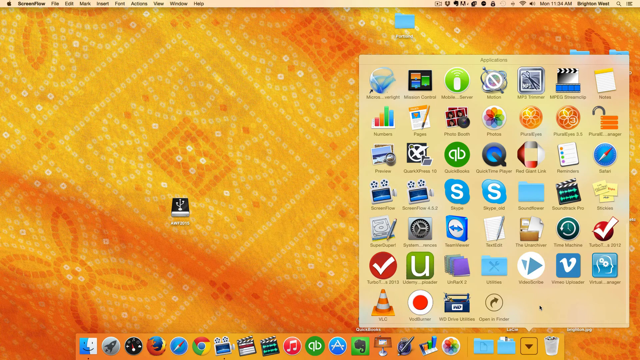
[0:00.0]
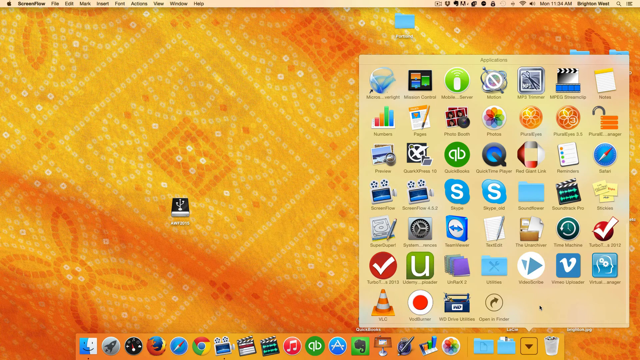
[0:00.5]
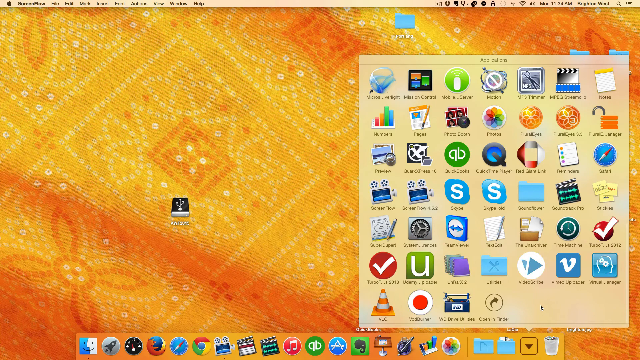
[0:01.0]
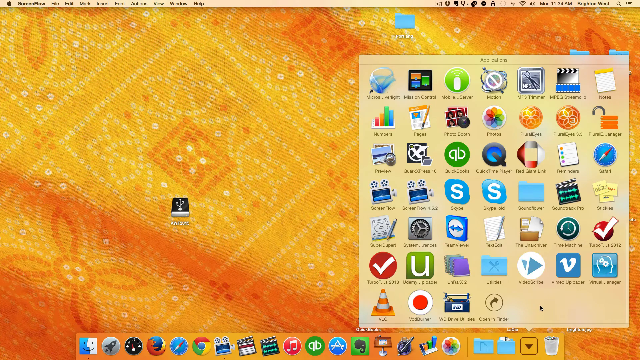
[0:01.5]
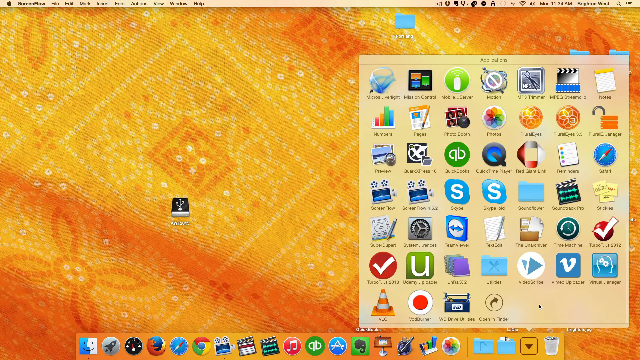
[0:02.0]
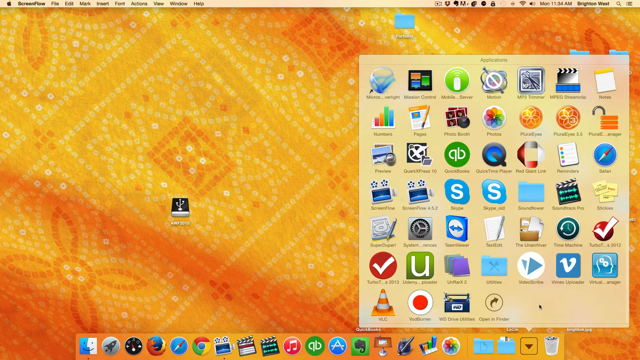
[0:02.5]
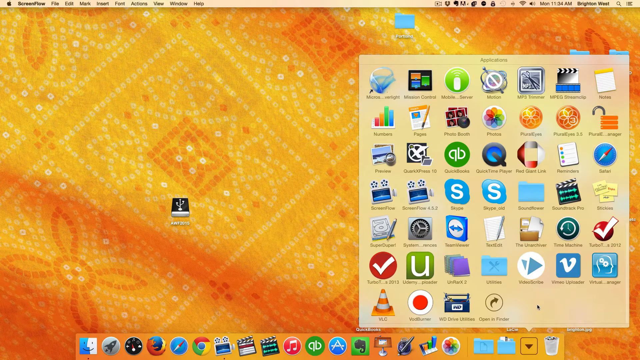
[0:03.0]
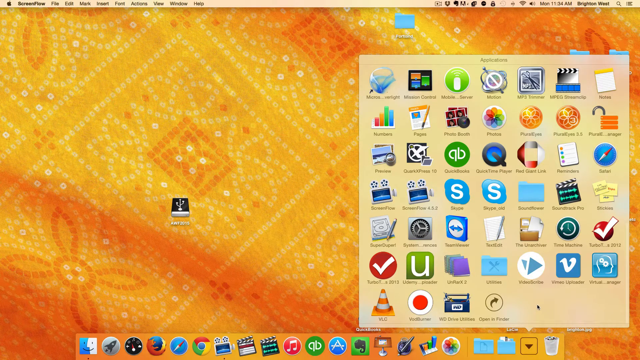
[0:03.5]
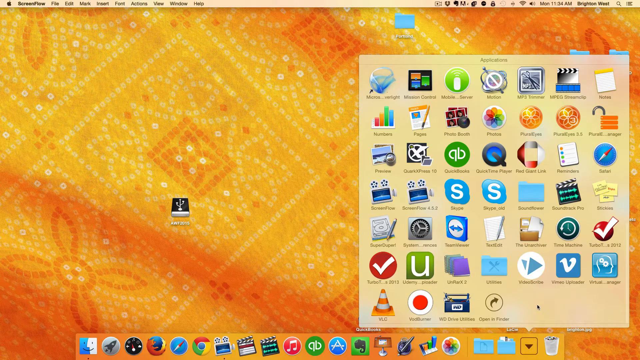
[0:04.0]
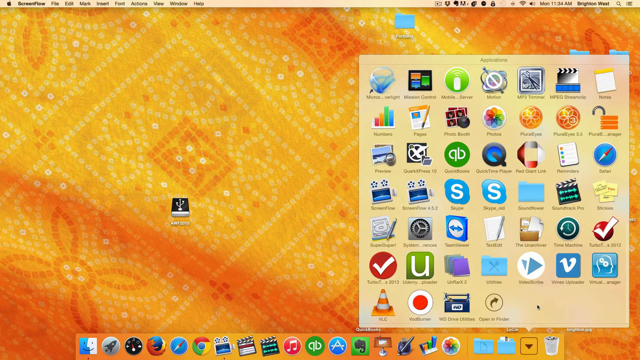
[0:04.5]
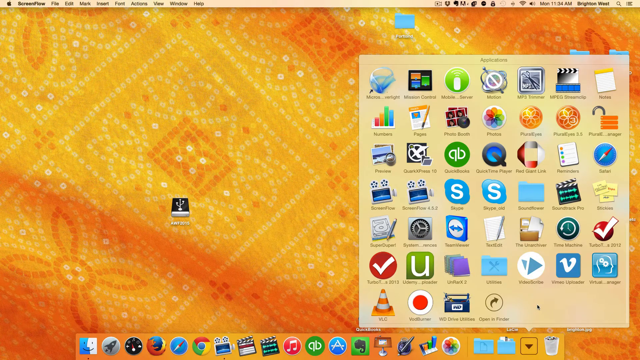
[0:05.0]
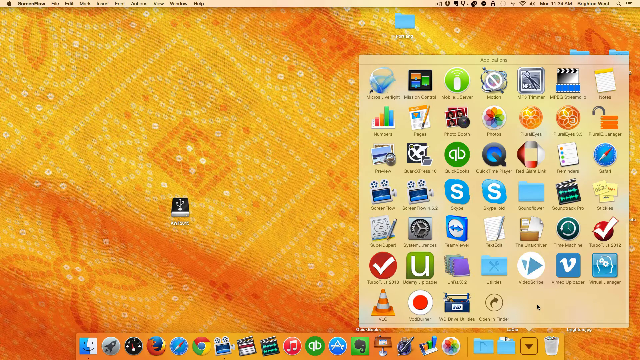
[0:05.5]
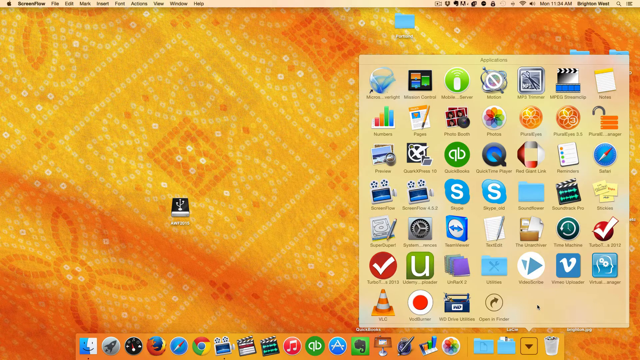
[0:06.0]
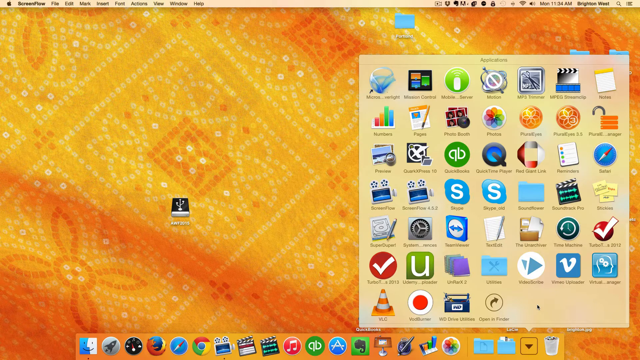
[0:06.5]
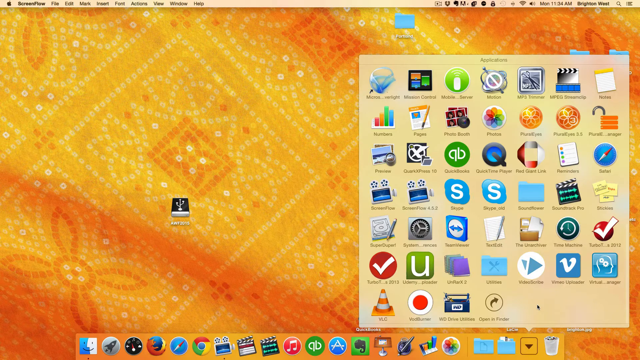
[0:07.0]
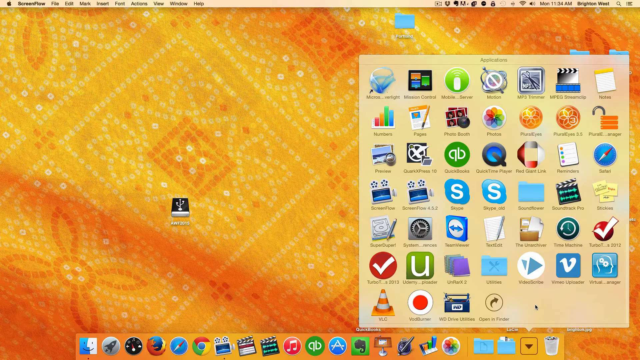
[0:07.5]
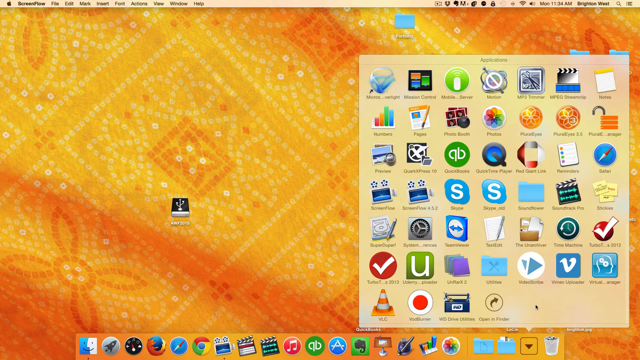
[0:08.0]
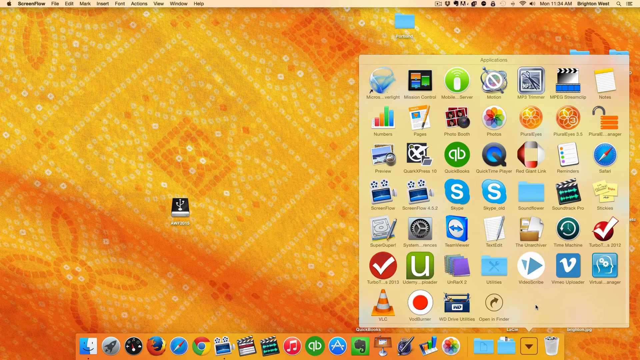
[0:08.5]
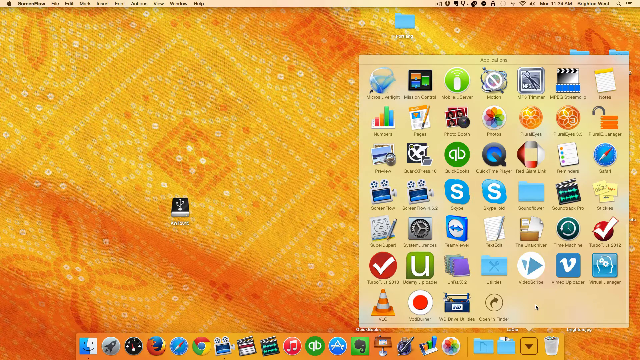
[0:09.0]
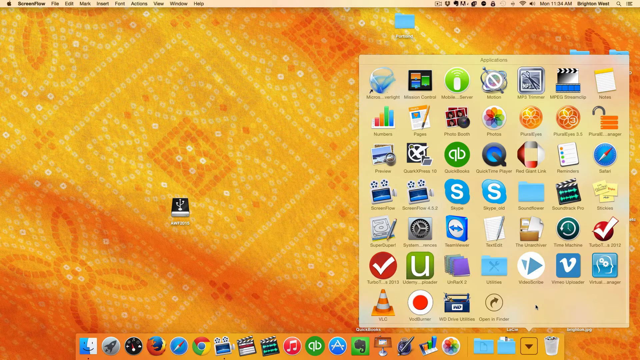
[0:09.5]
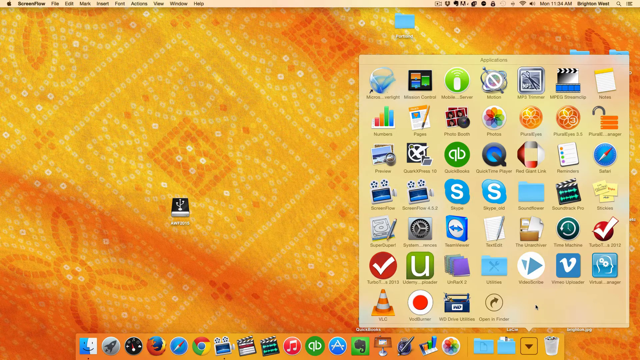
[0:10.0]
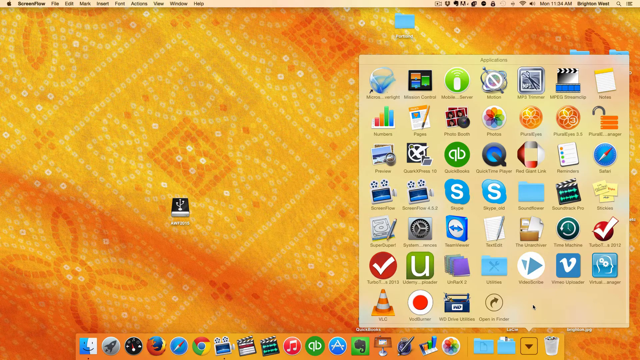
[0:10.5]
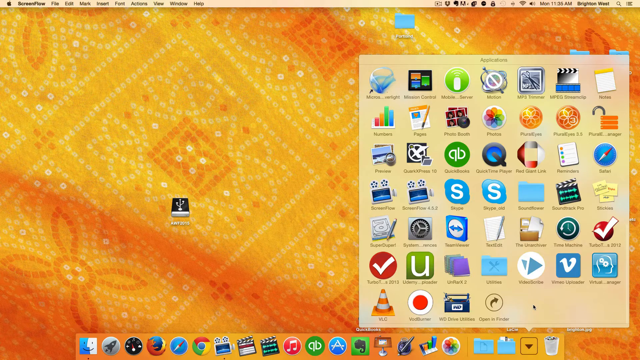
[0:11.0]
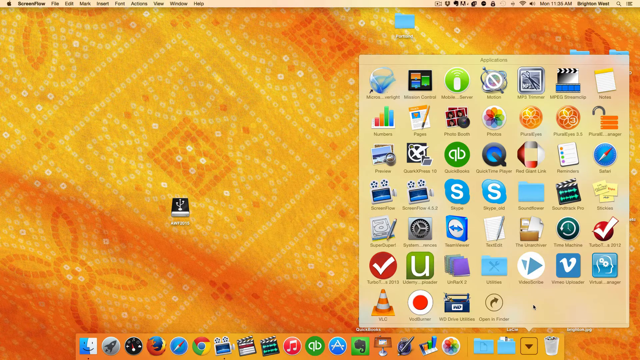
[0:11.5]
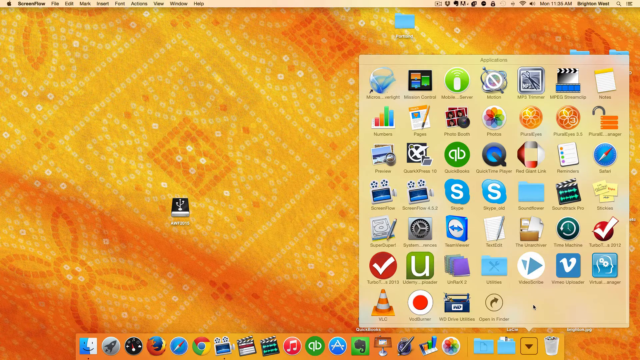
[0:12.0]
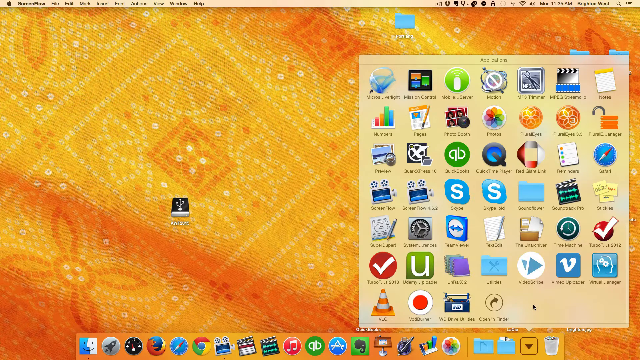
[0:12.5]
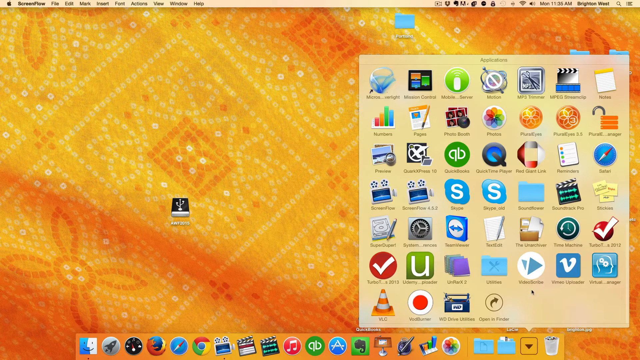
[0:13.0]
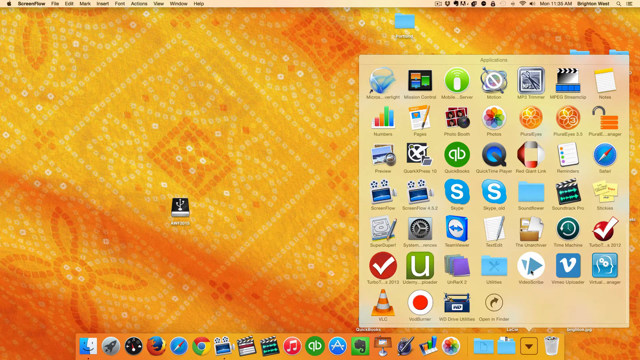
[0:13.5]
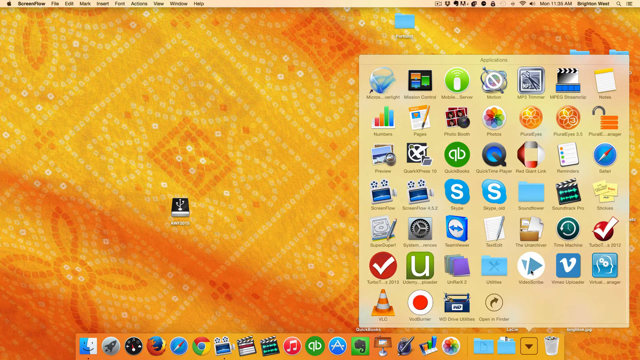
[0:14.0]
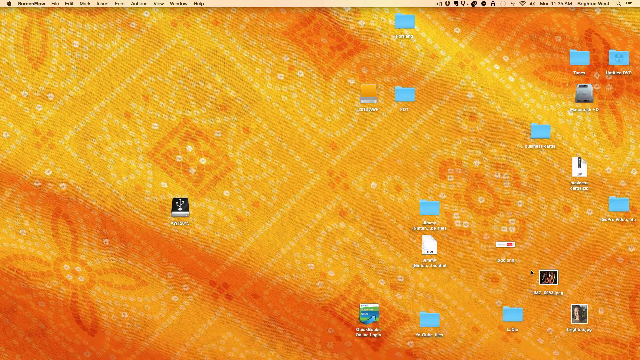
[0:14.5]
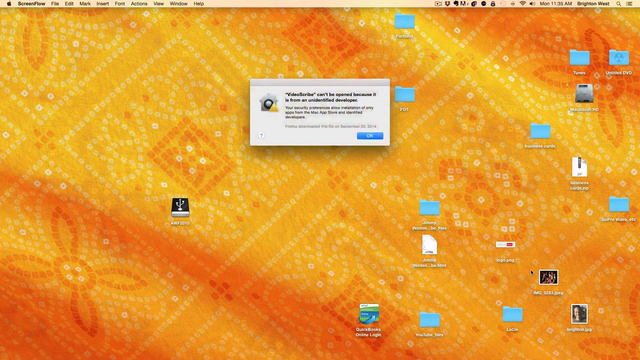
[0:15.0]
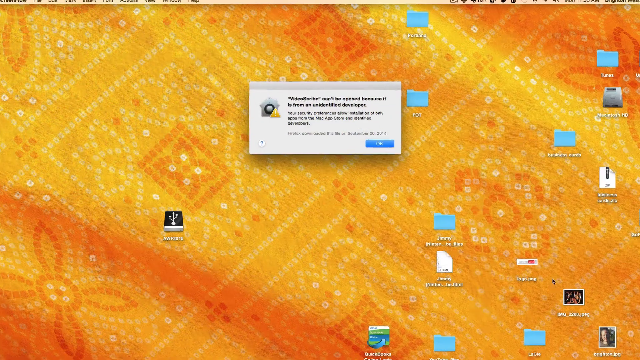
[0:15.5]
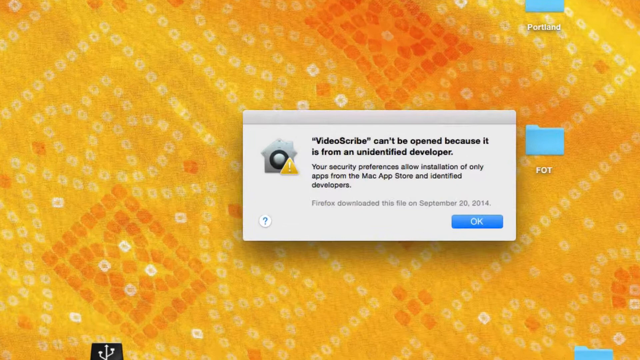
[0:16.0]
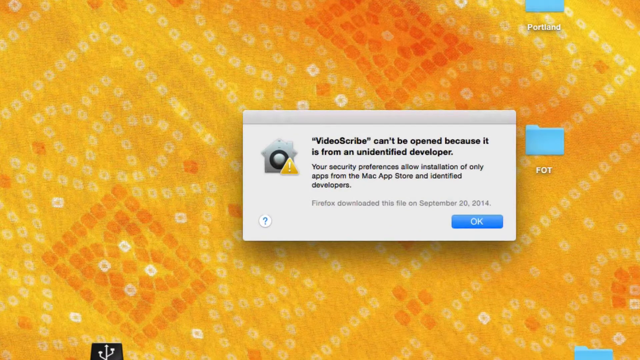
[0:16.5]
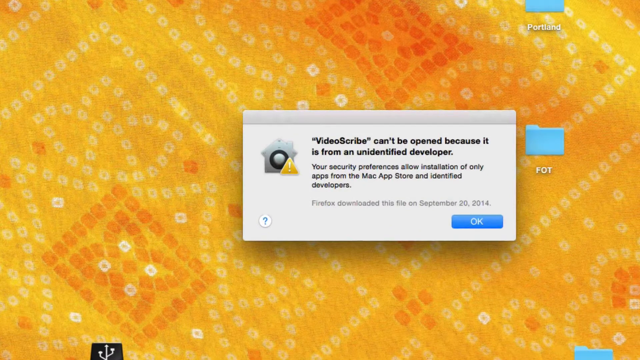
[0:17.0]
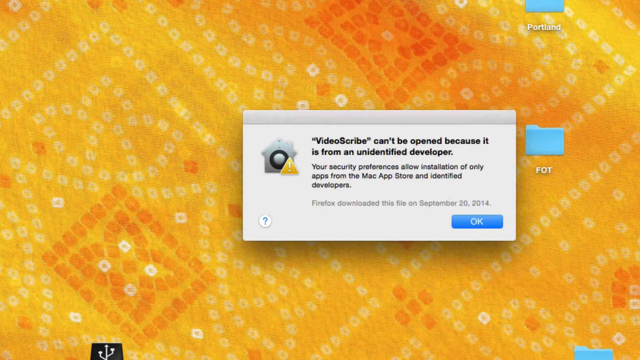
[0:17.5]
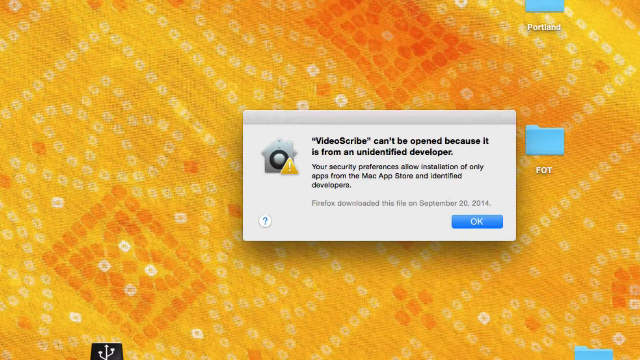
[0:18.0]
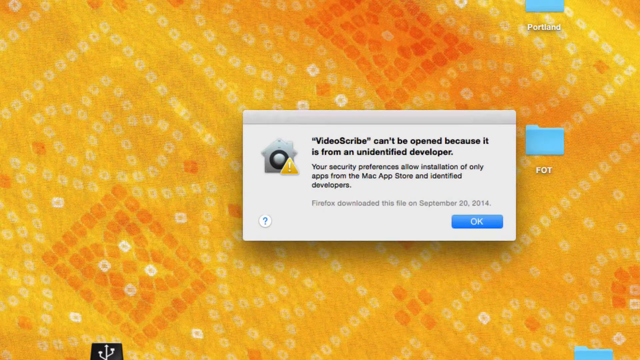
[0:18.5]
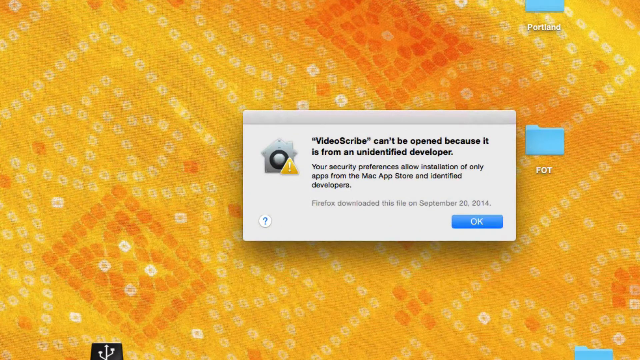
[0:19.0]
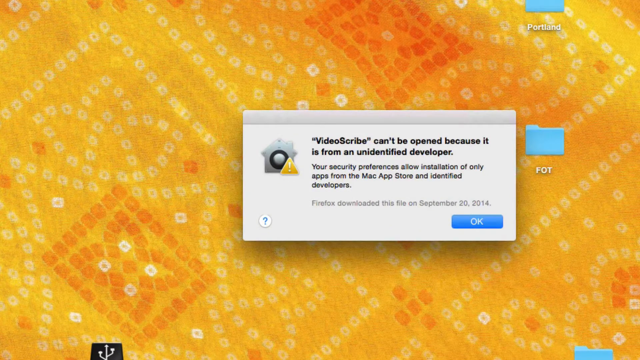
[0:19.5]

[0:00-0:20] On a macOS background, a message appears showing that an application called VideoScribe is not being given permission to open. It states that "VideoScribe can't be opened because it is from an unidentified developer" and "Your security preference allows installation of only apps from the Mac App Store and unidentified developers."